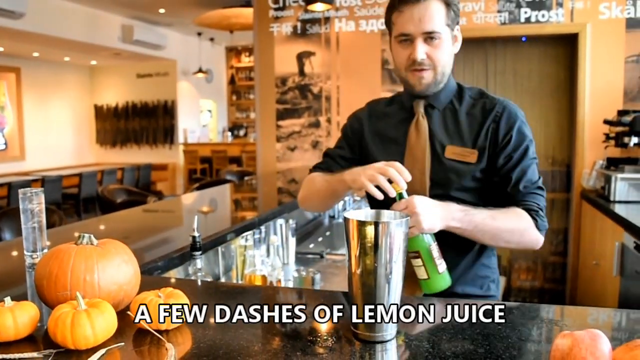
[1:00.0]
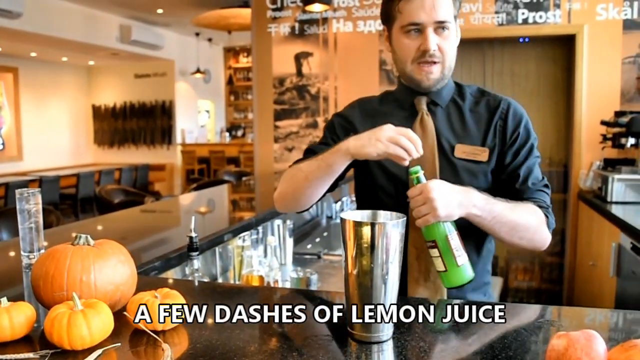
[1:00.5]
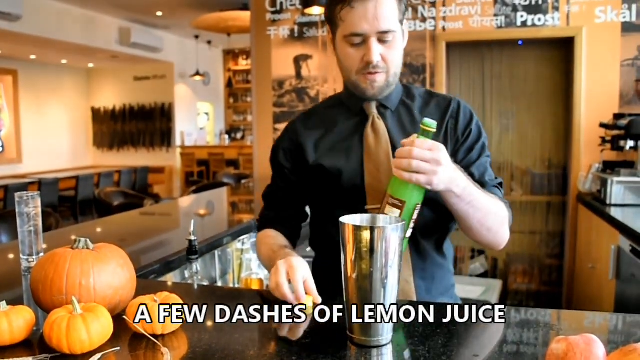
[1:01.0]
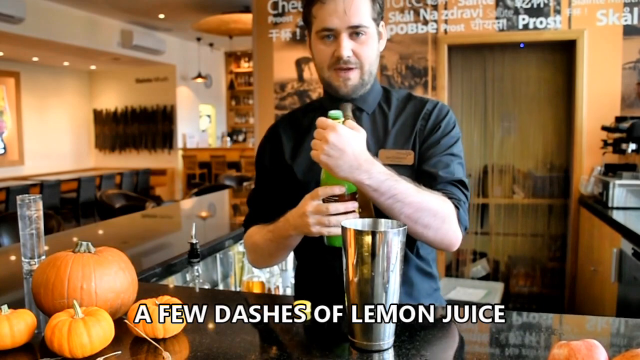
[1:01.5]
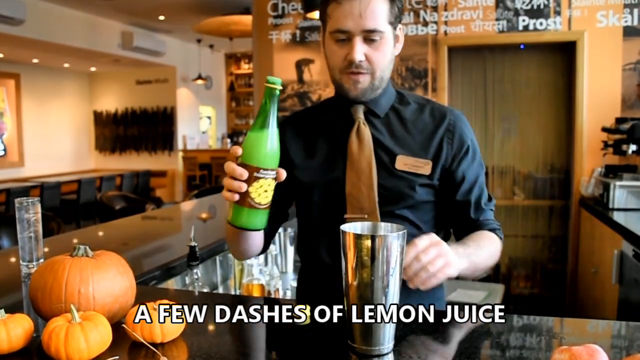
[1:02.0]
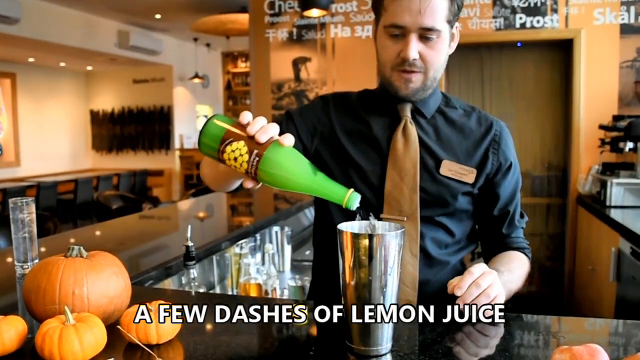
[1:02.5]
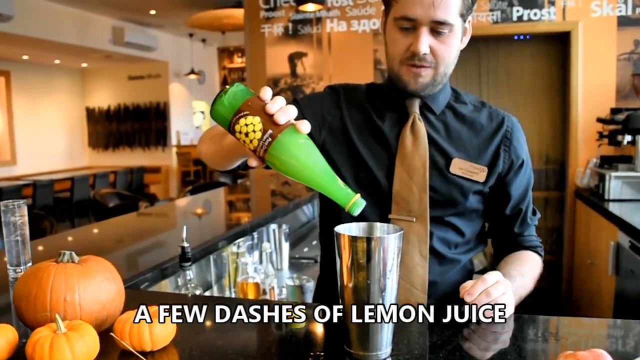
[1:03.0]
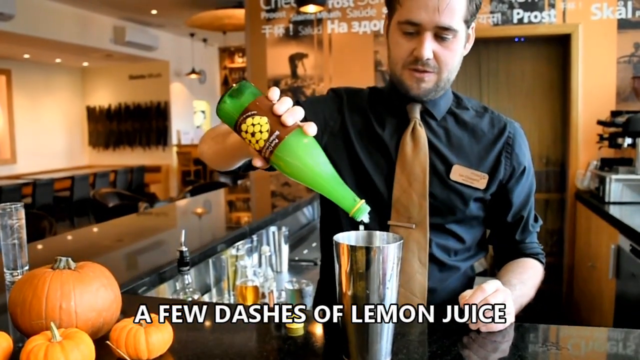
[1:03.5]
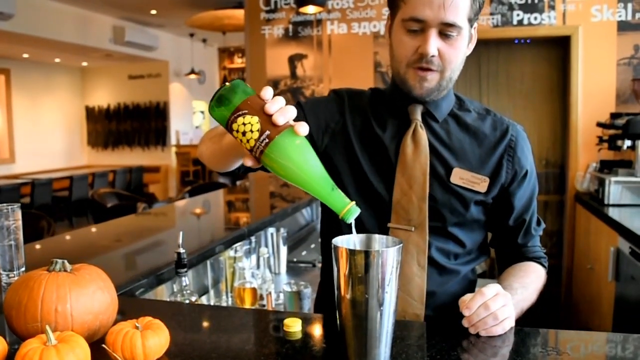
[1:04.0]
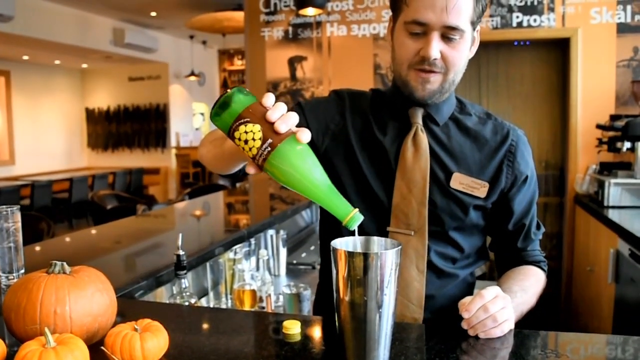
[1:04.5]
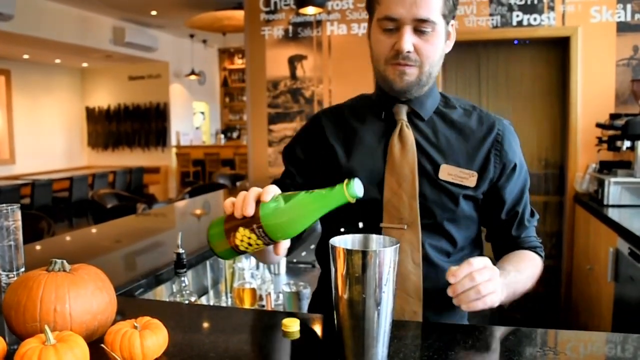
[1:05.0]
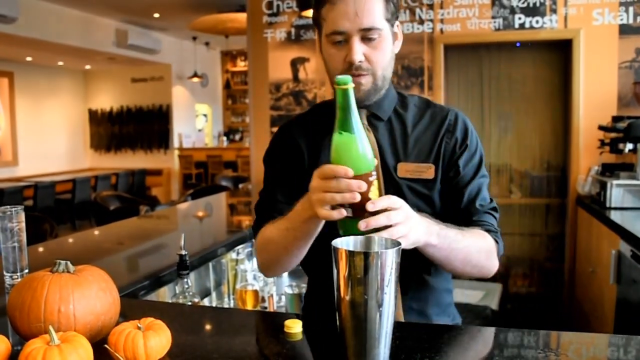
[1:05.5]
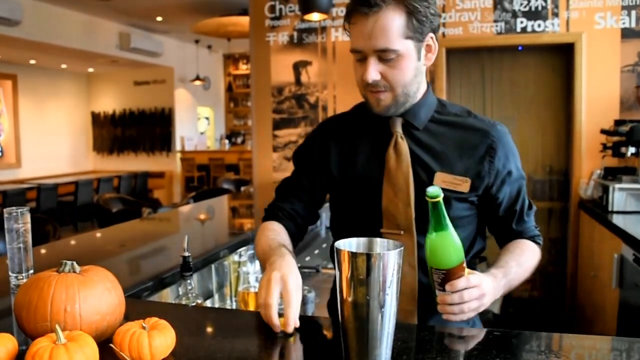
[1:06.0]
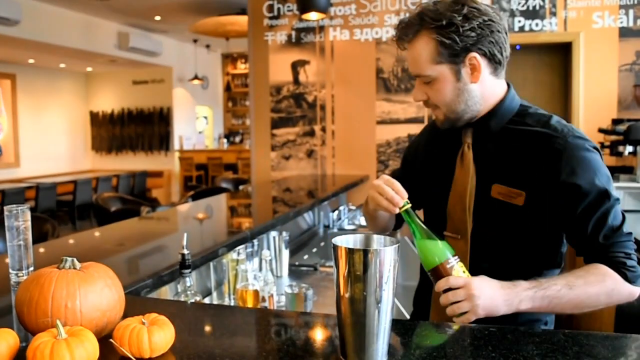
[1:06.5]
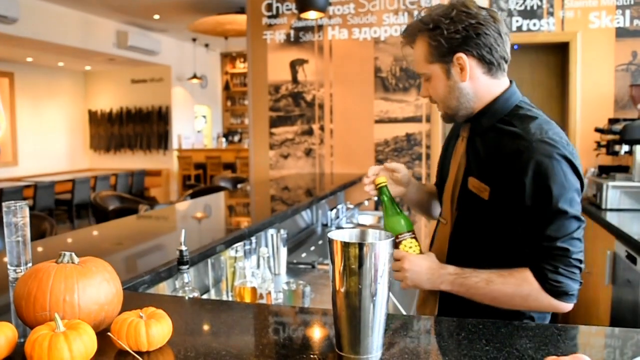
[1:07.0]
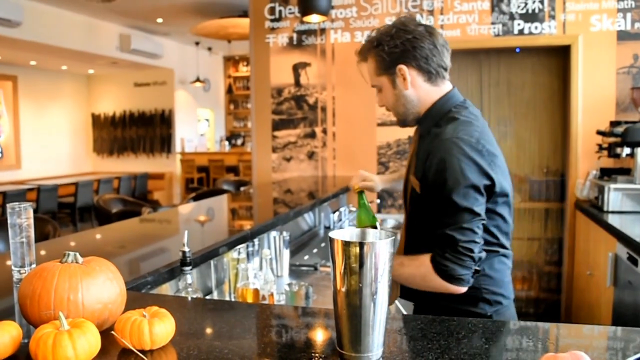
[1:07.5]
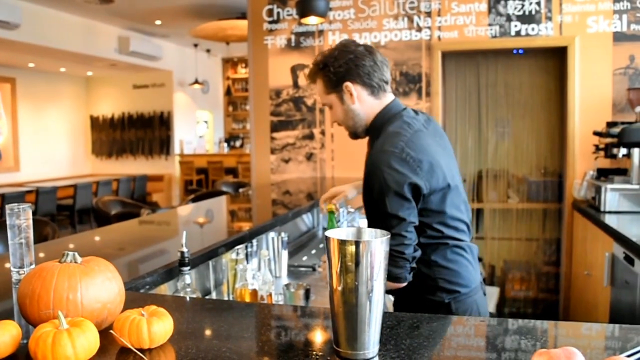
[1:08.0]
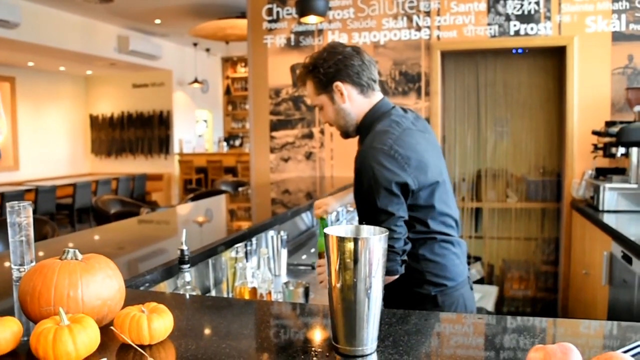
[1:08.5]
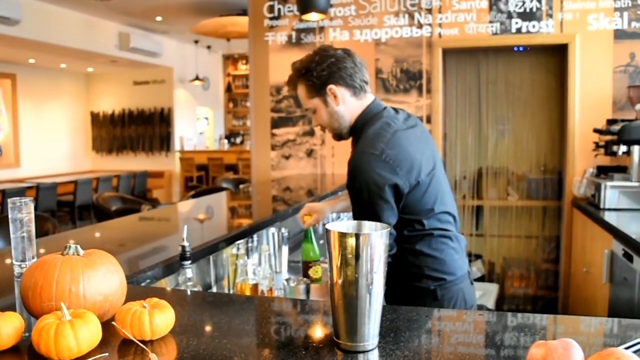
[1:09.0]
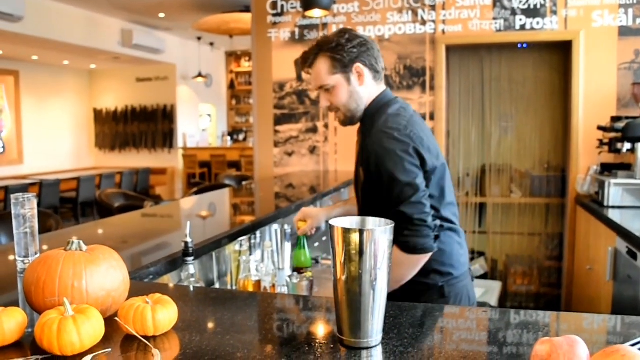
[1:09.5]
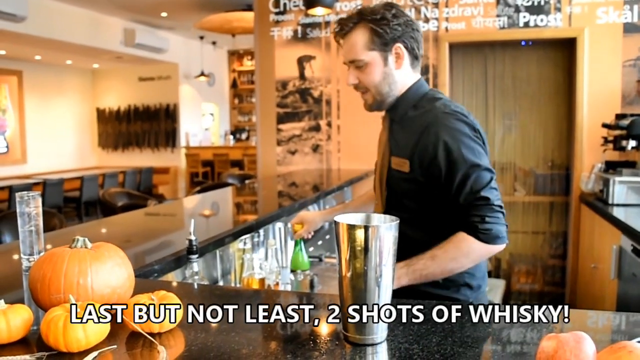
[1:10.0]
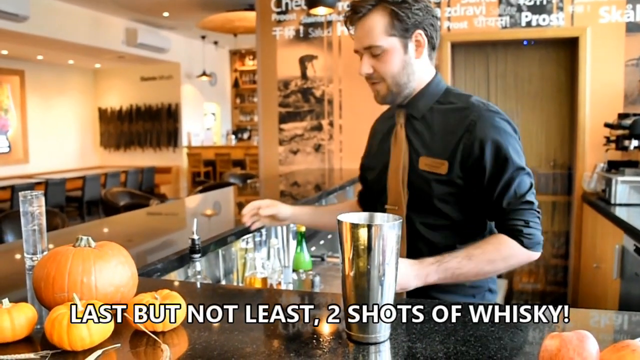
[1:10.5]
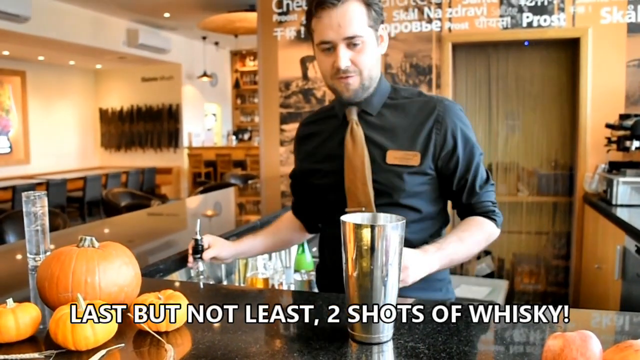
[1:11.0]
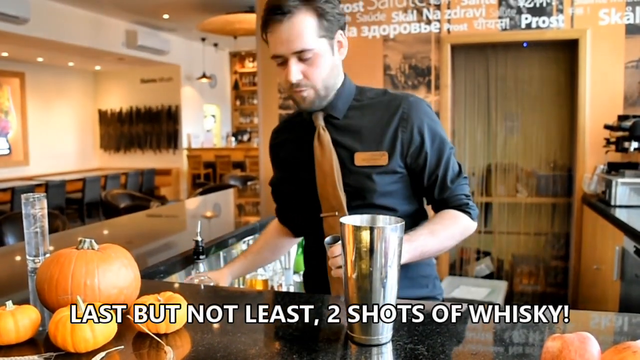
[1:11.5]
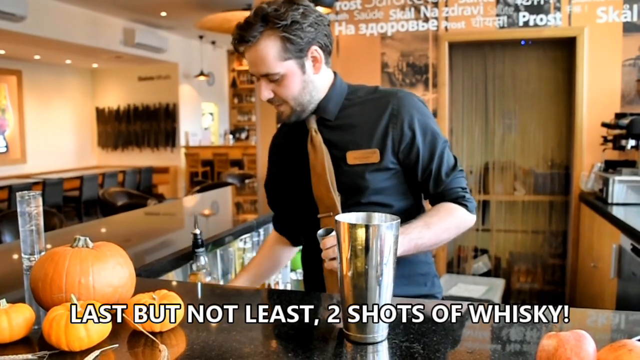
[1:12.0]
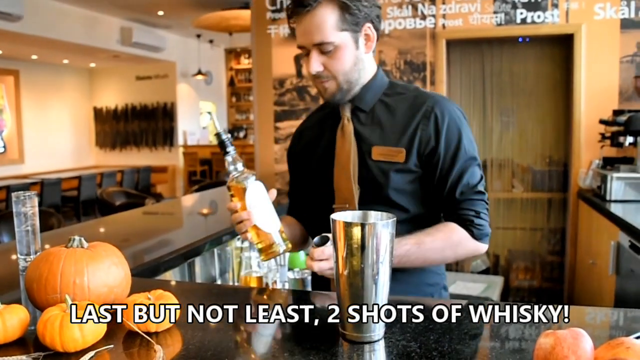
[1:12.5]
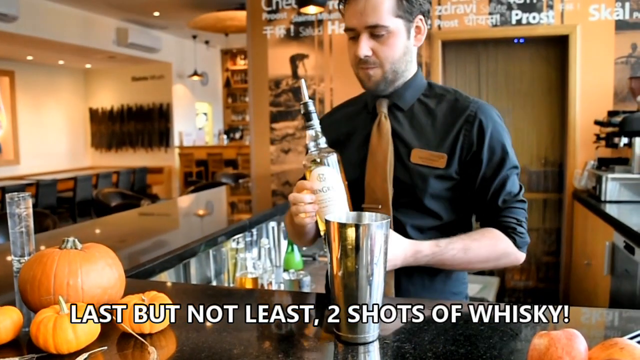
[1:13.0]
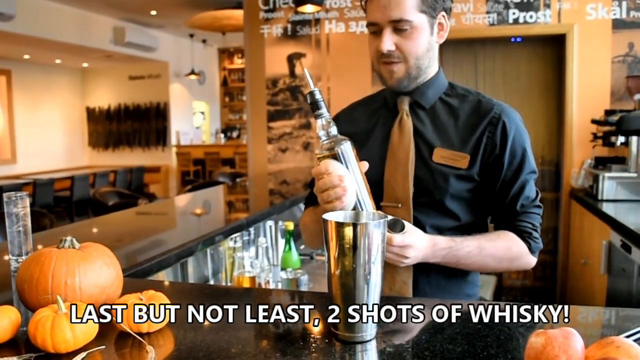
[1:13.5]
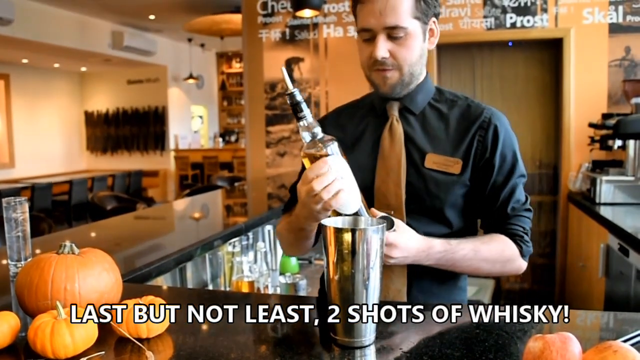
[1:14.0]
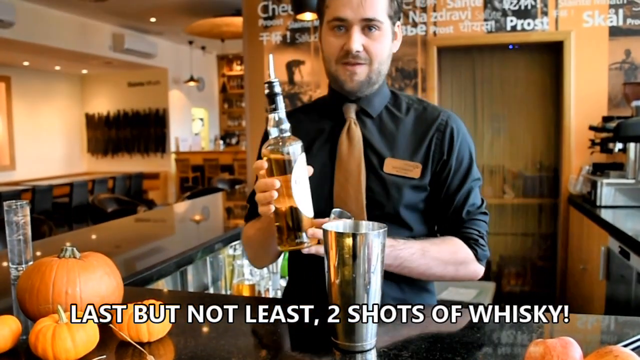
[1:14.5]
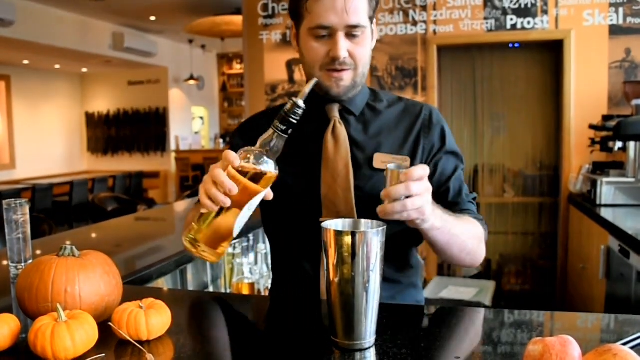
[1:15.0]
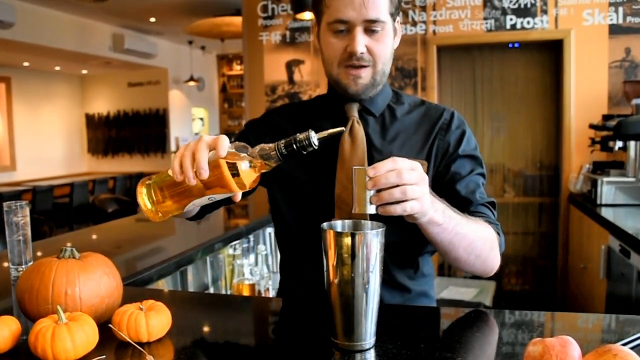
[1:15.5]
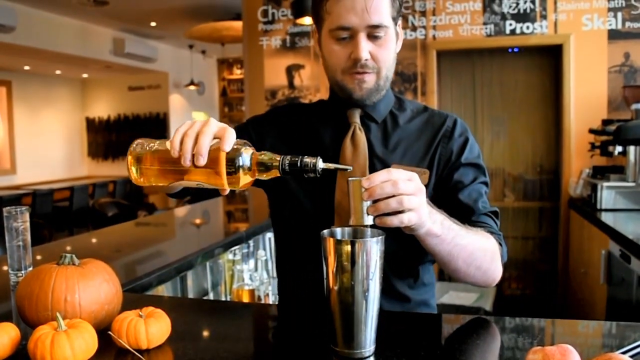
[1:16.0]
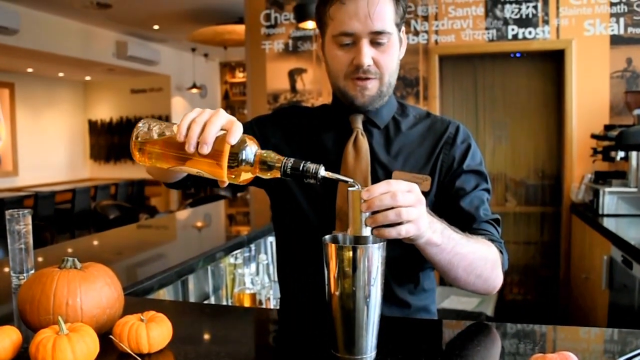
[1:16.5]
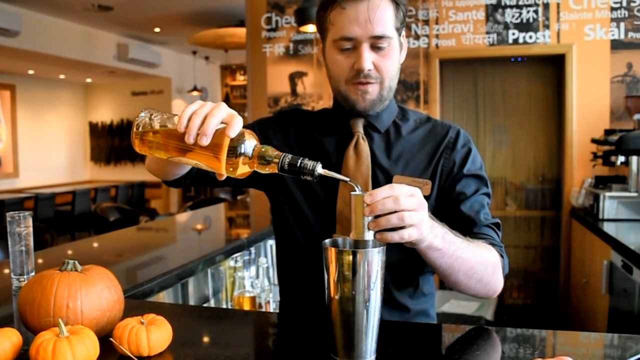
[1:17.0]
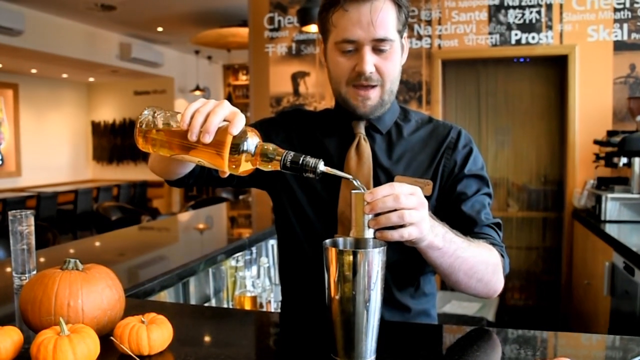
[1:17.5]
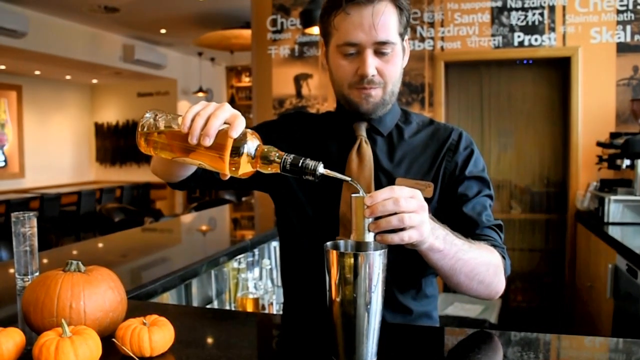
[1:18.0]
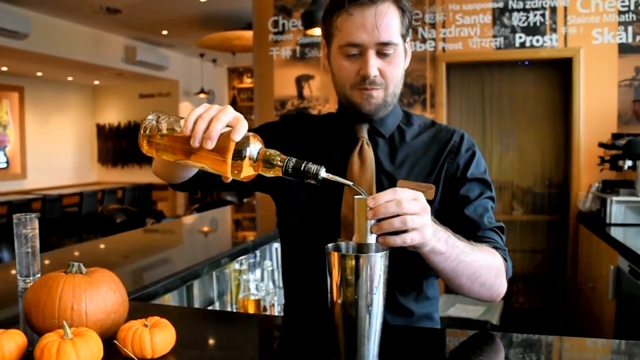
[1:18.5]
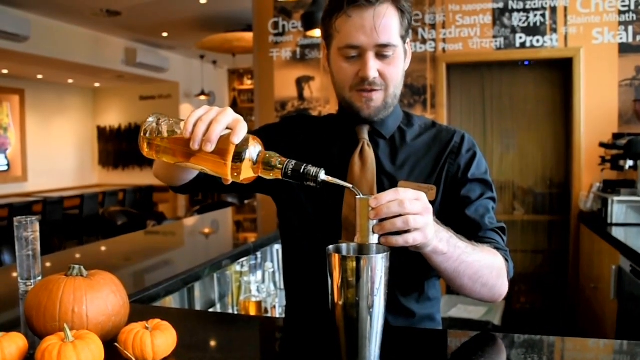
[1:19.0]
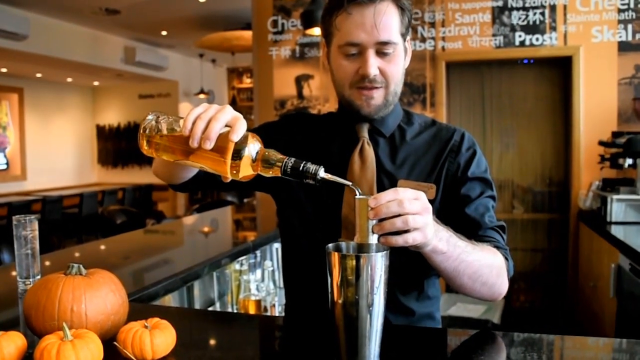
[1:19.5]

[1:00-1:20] The bartender, in his mid-30s with dark hair and dark eyes, wears a black long-sleeve shirt that is rolled up and an orange tie; together with the pumpkins in front of him, this marks the scene as Halloween. Text reads "a few dashes of lemon juice", and he pours a few dashes of lemon juice into the large silver mixing cup in front of him. In front of him, to the viewer's left, are a large pumpkin and three smaller pumpkins. The countertop in front of him is black and also goes around to his right side. No one else is visible in the bar.